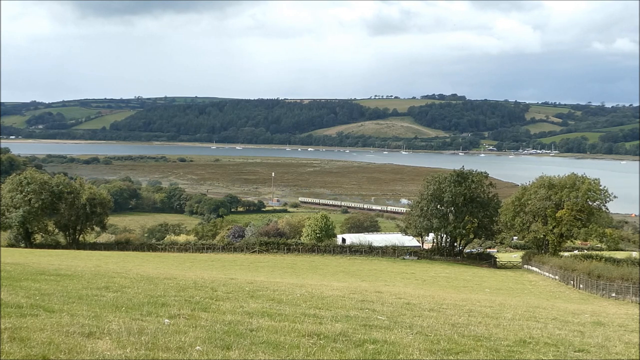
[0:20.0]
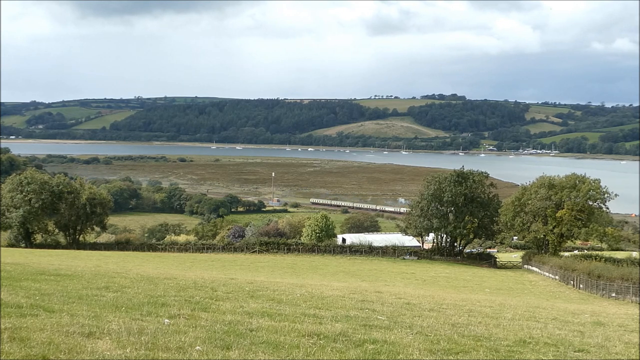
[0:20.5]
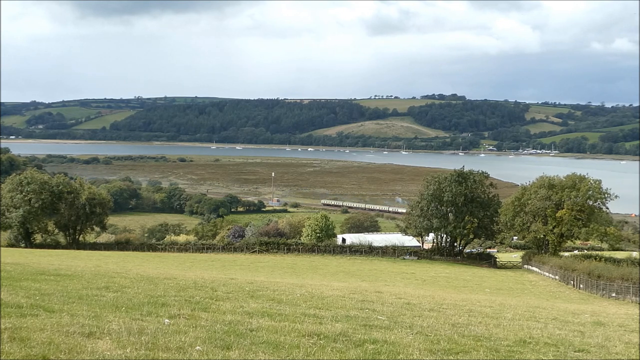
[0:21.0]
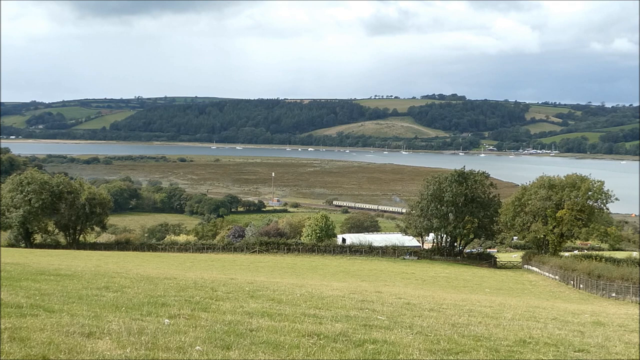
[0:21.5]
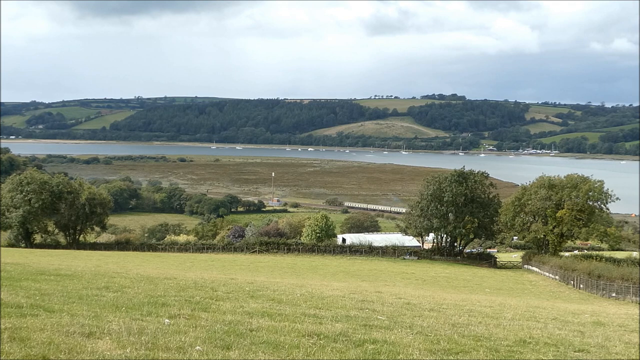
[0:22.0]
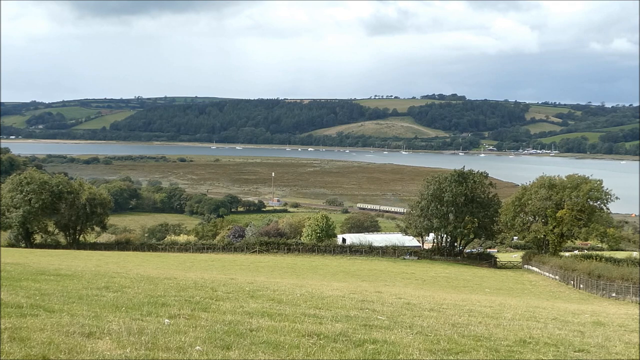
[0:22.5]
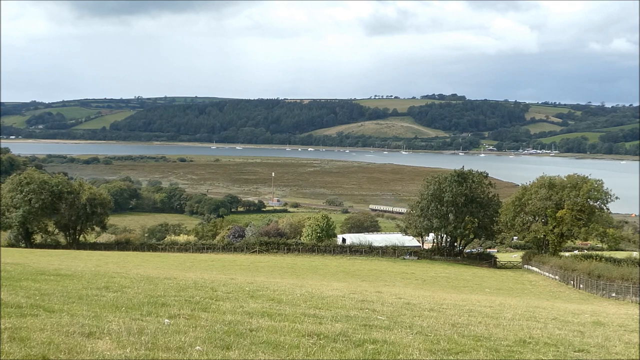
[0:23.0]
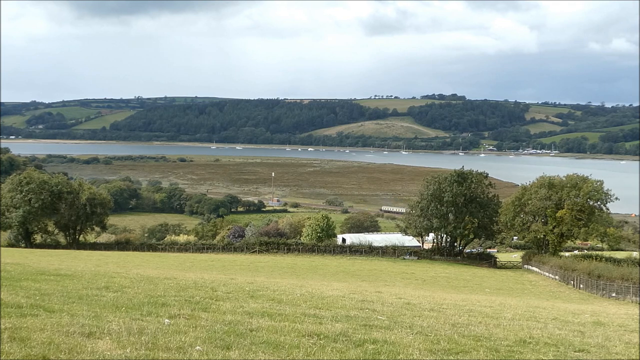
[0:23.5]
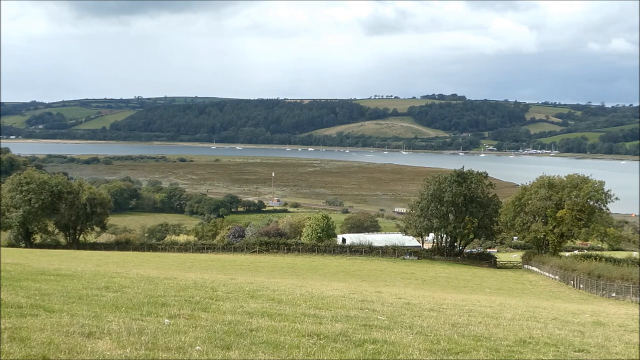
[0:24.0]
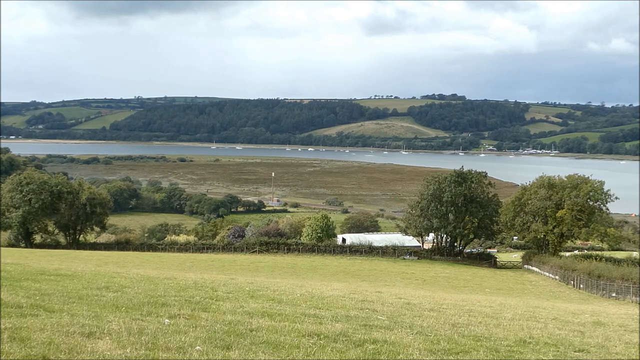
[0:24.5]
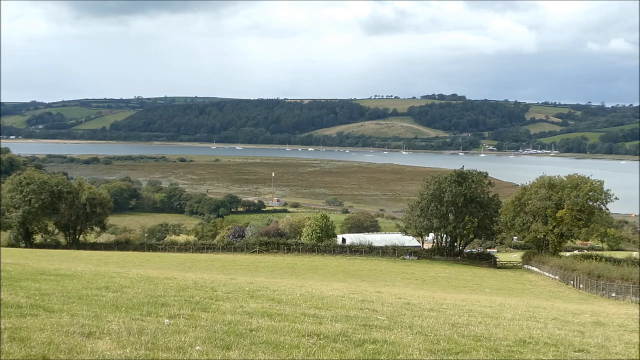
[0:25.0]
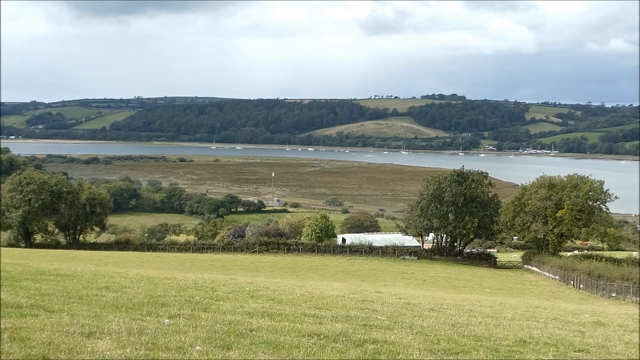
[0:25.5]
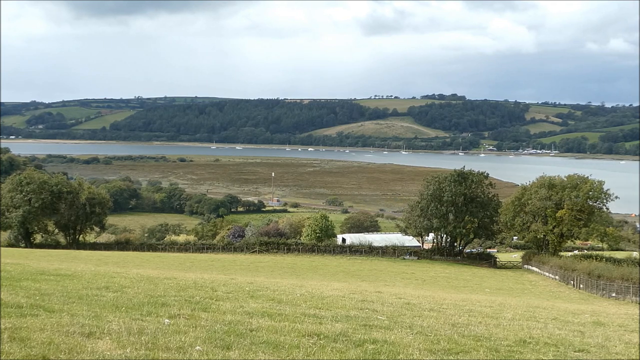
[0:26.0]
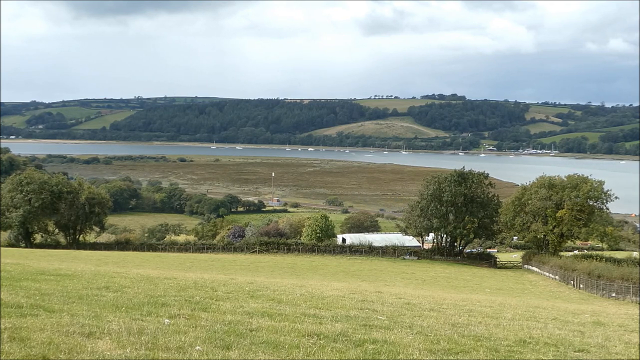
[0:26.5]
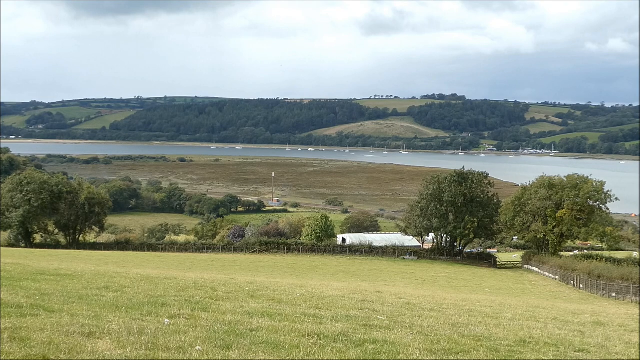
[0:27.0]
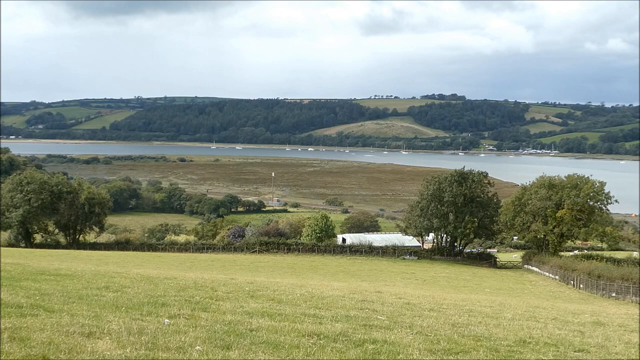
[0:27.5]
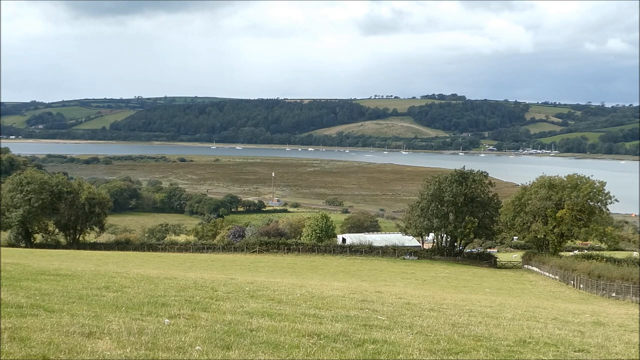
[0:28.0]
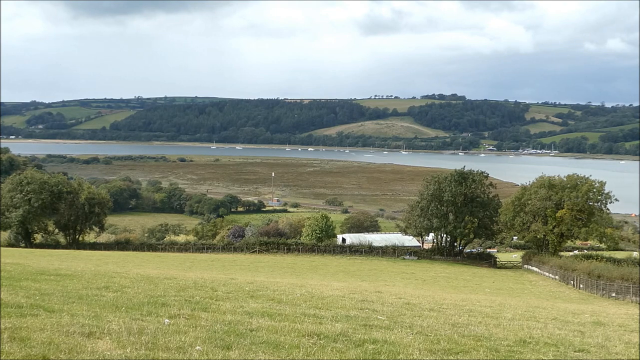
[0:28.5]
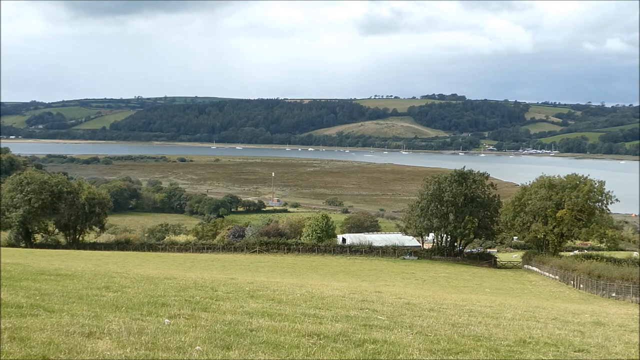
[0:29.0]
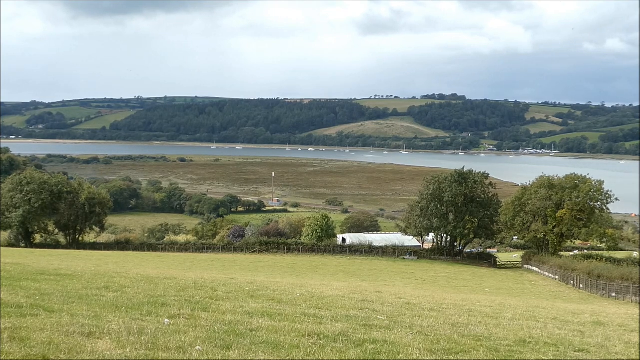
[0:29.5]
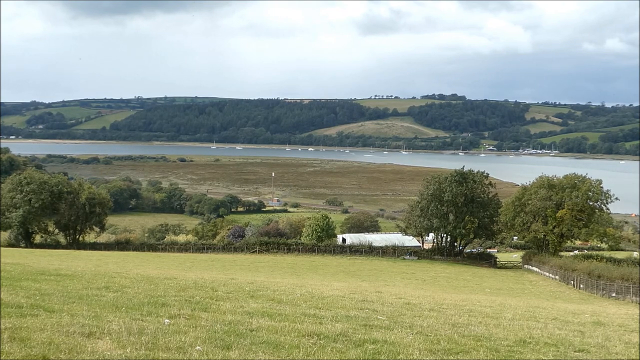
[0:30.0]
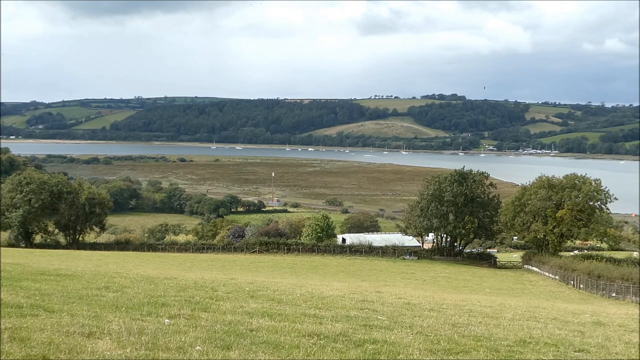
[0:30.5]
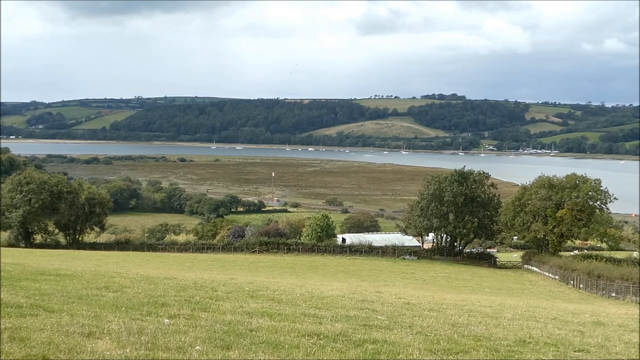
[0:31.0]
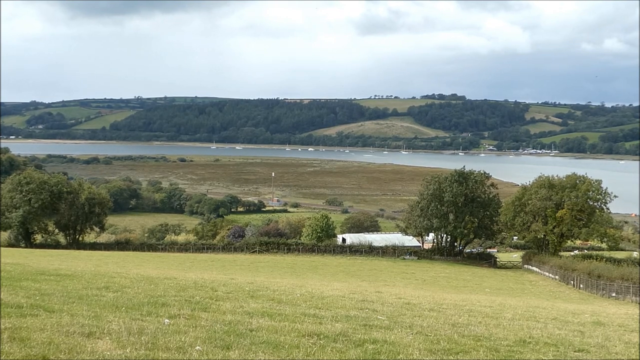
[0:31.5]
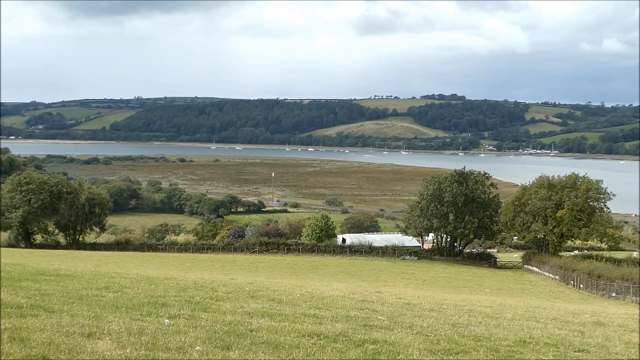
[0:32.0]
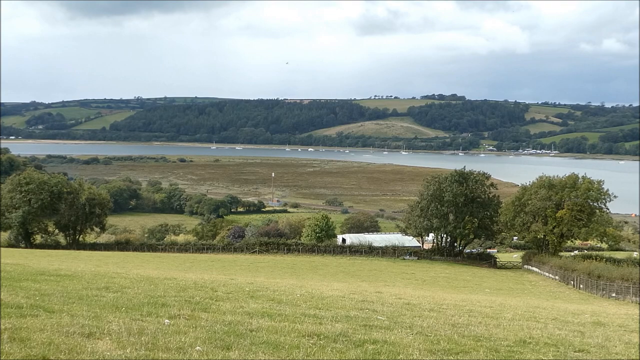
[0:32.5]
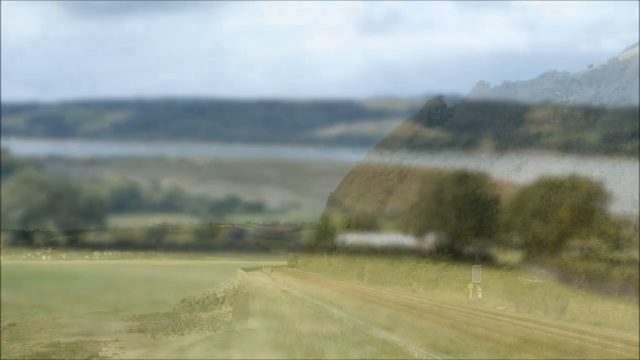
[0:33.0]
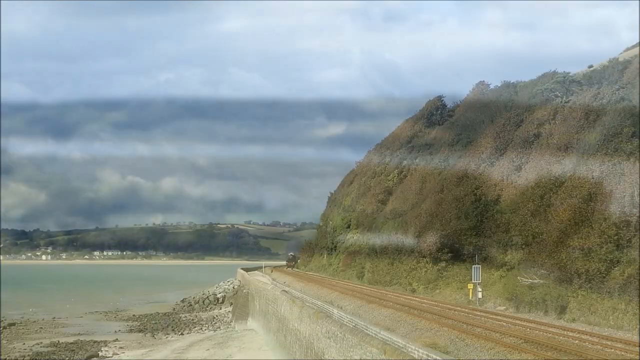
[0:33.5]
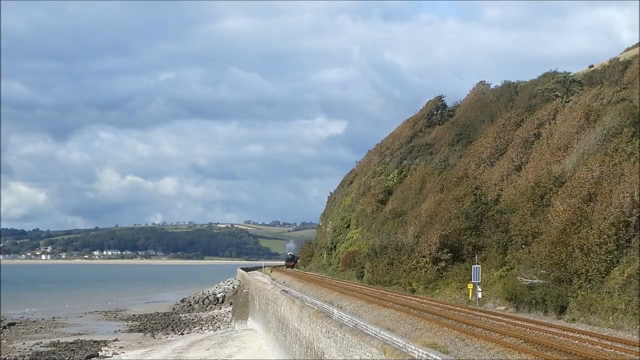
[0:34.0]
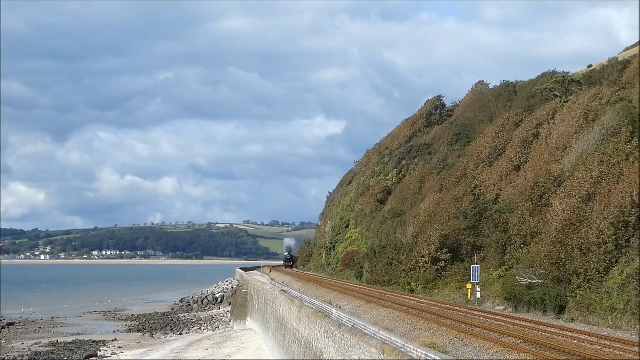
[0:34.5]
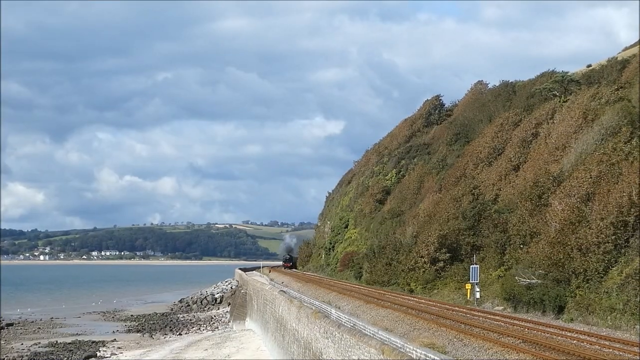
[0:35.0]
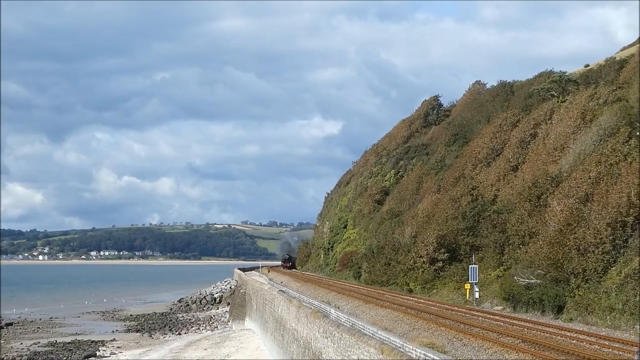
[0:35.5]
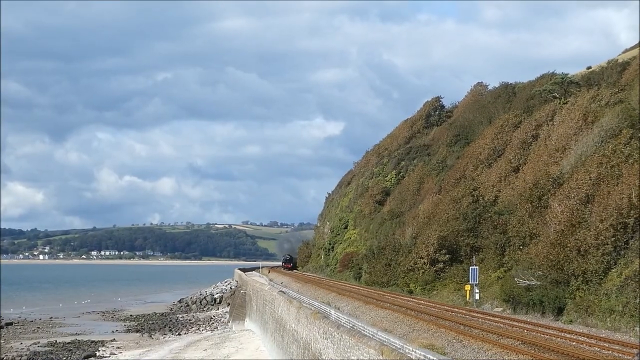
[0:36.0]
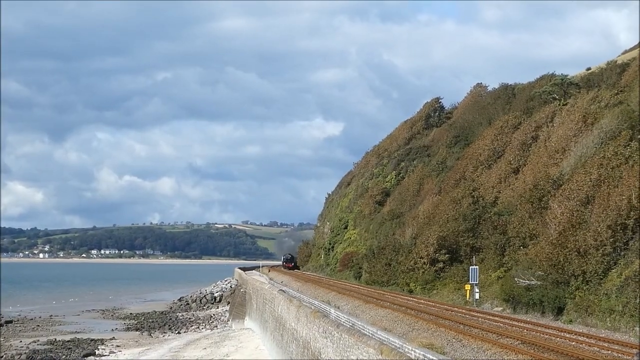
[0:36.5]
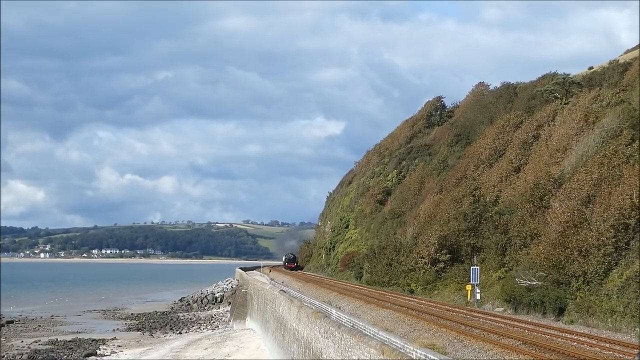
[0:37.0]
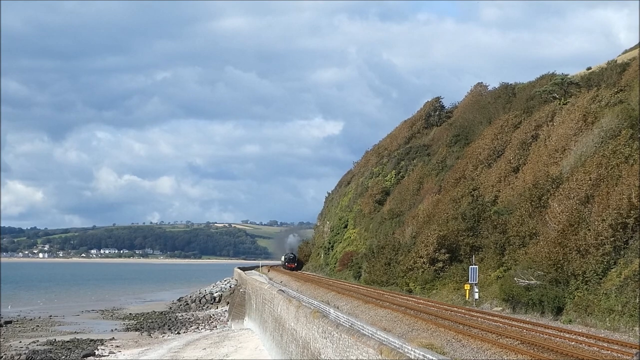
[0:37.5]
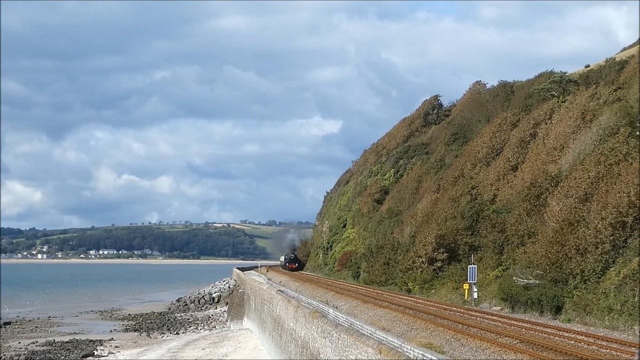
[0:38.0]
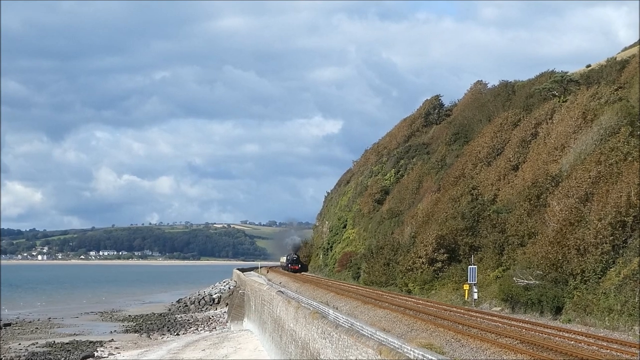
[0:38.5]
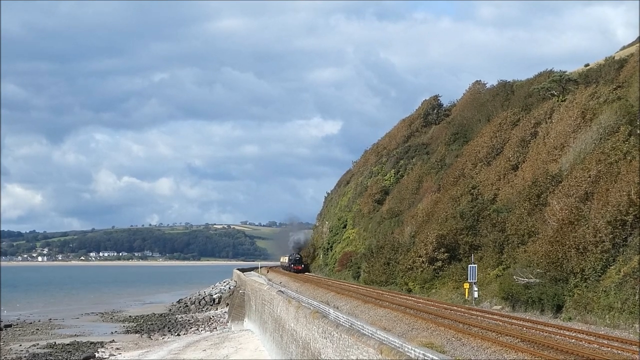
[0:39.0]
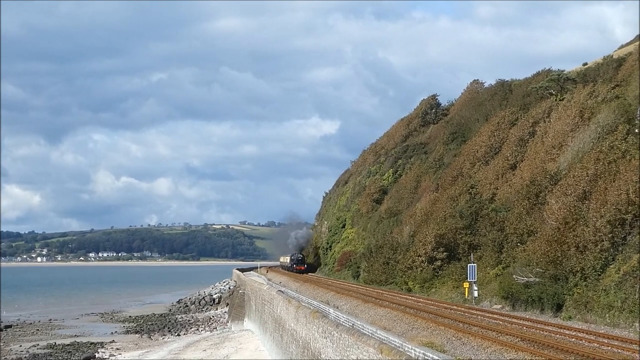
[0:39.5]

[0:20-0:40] The same train, having traveled from the left, is now in the center and continues to the right side, where it goes off-camera. The view is unchanged: a huge hill in the background, the plain in the center behind the train, and the lake behind that. The sky is very clear with some clouds, and the plain field is in the front. The scene then switches to the train coming in from the center toward the camera, off to the right side, on a train track. On the right-hand side is a hill or kind of mountain-like section covered in green or slightly brown greenery, shrubs and grass, and on the left-hand side are some rocks and the body of water. Clouds run all along the upper left and extend somewhat to the right side. In the back there is more greenery, a hill, and what looks like a town.